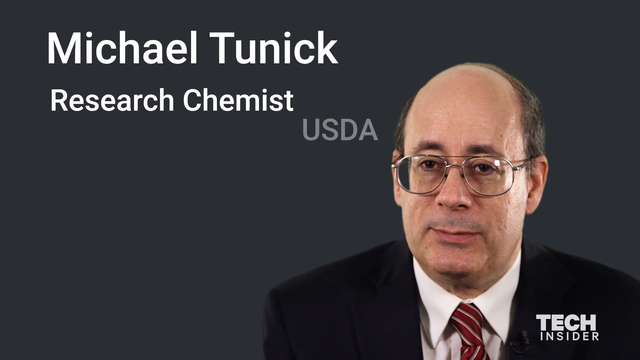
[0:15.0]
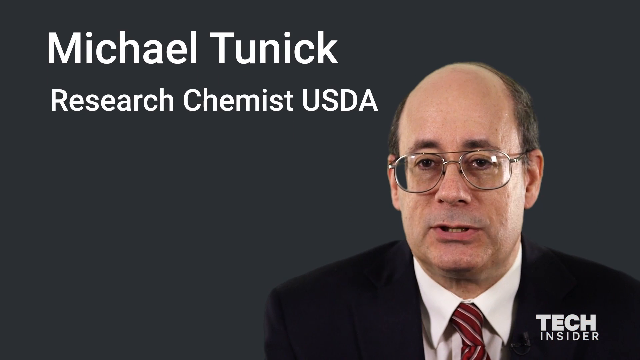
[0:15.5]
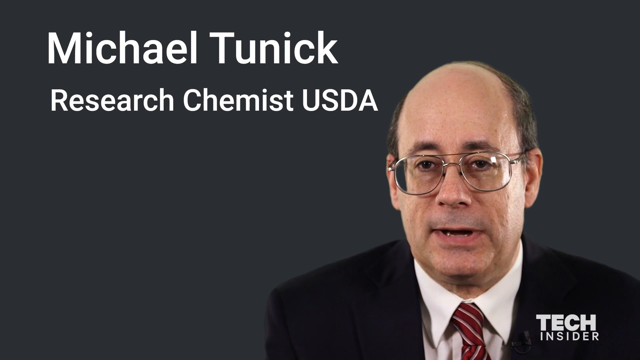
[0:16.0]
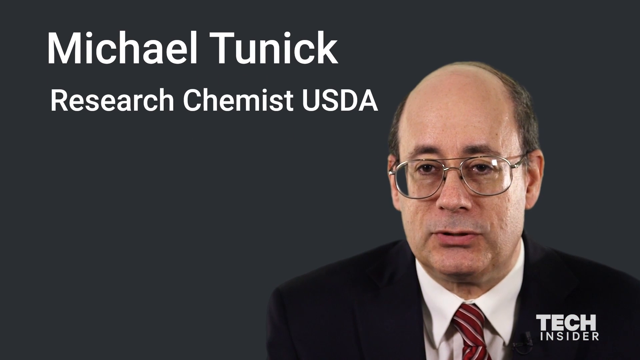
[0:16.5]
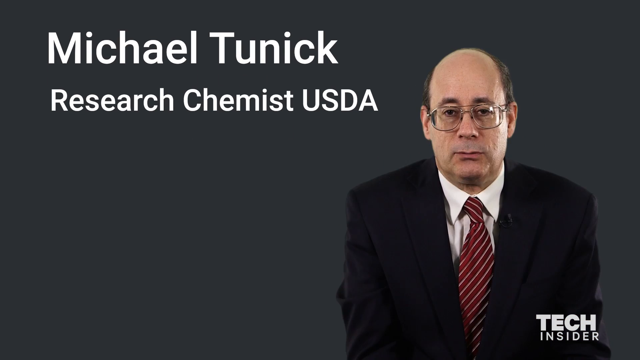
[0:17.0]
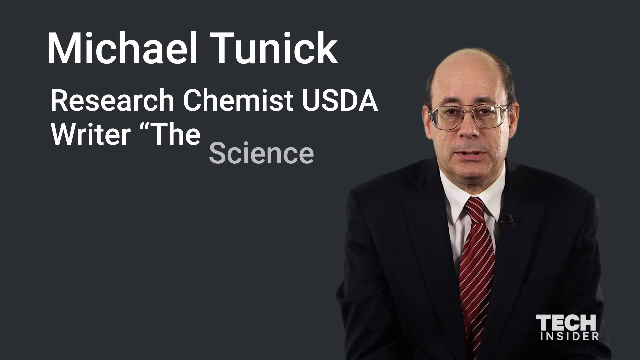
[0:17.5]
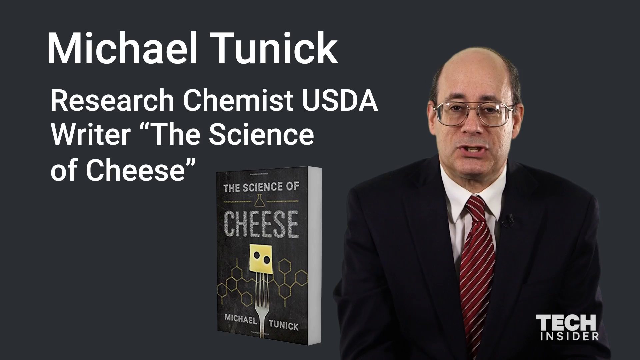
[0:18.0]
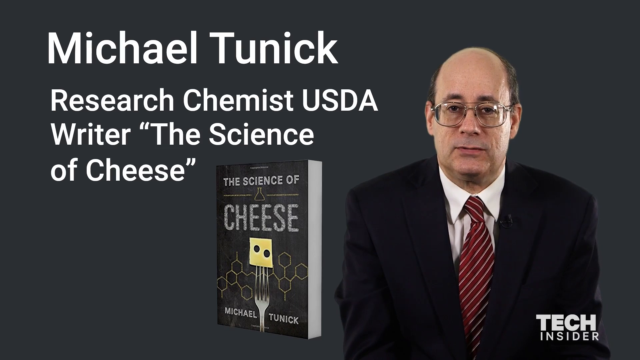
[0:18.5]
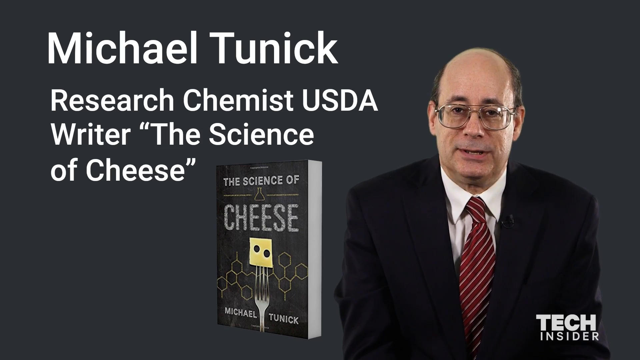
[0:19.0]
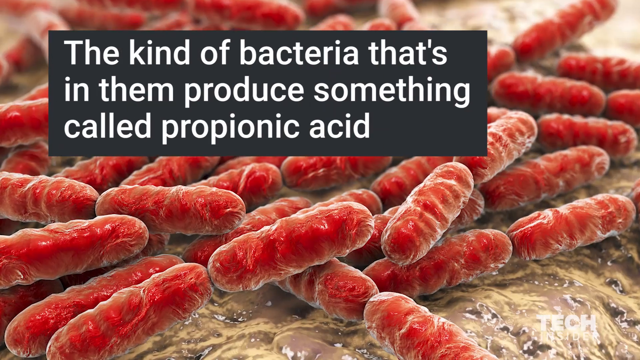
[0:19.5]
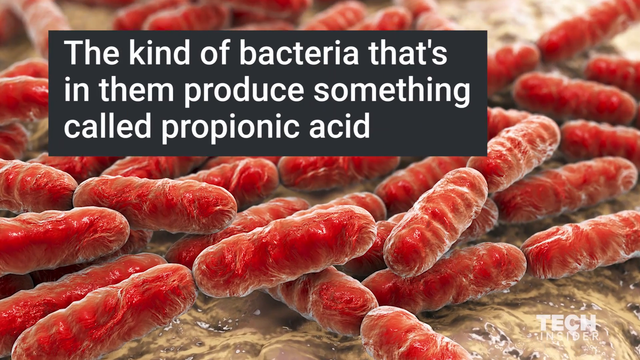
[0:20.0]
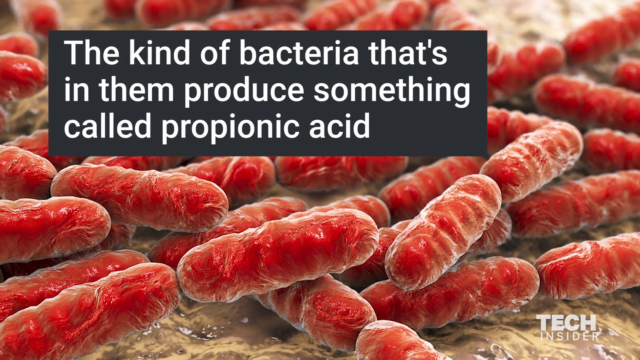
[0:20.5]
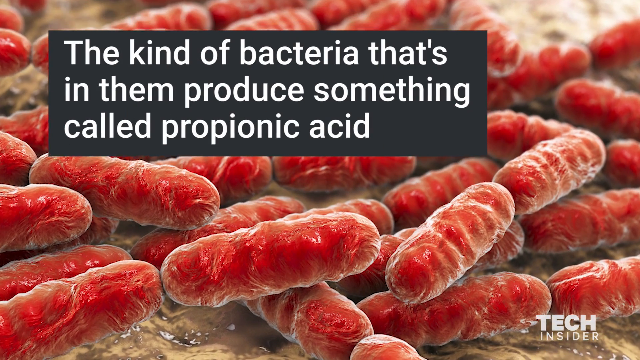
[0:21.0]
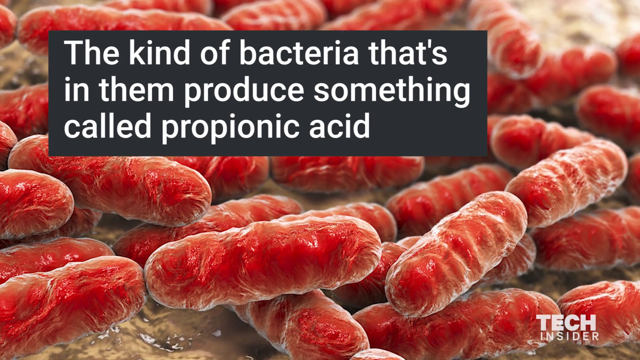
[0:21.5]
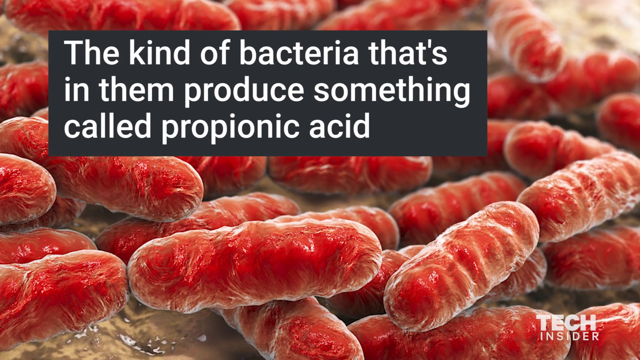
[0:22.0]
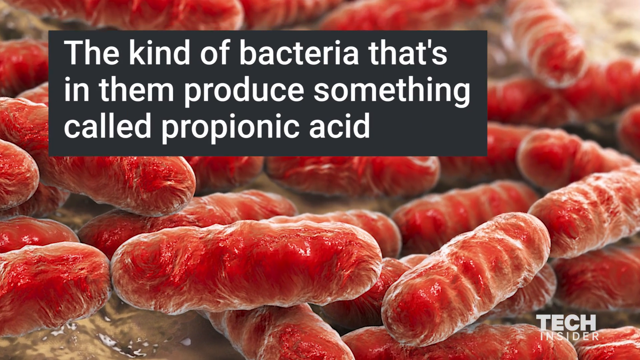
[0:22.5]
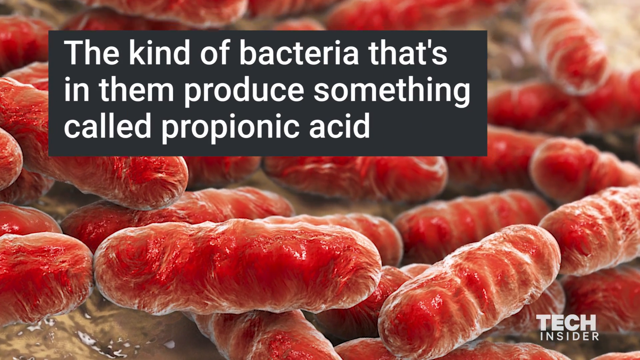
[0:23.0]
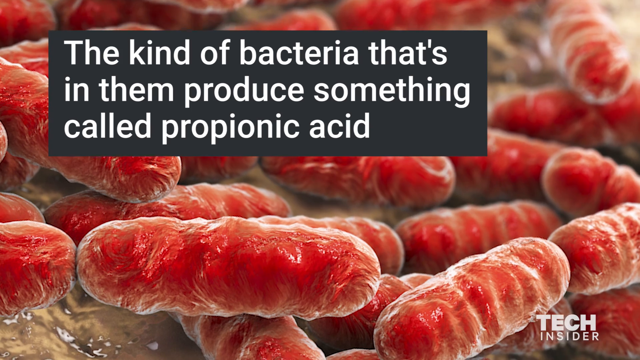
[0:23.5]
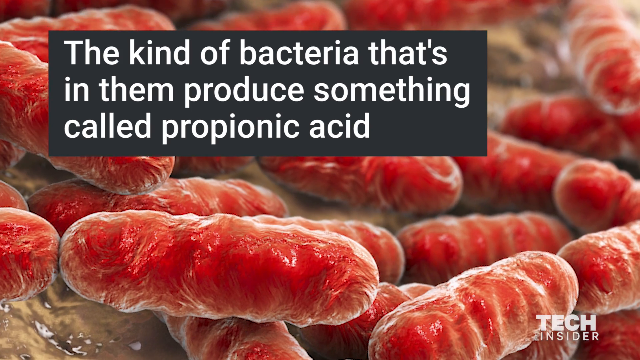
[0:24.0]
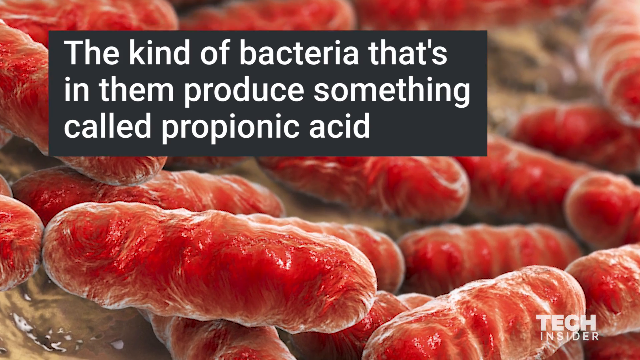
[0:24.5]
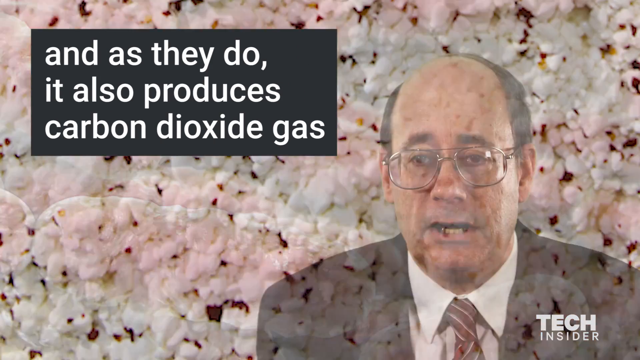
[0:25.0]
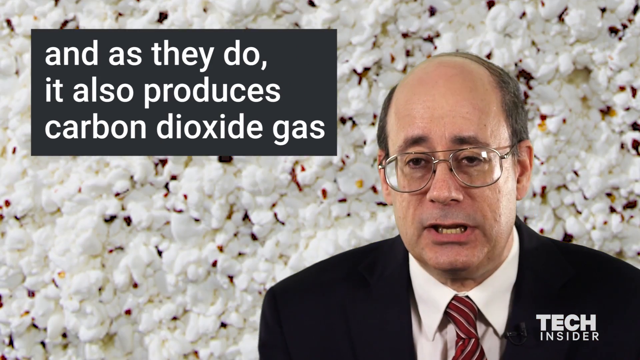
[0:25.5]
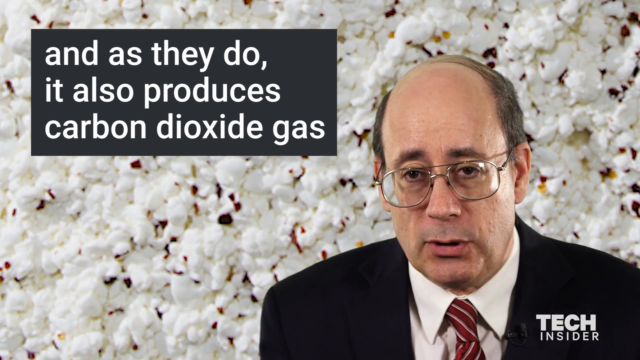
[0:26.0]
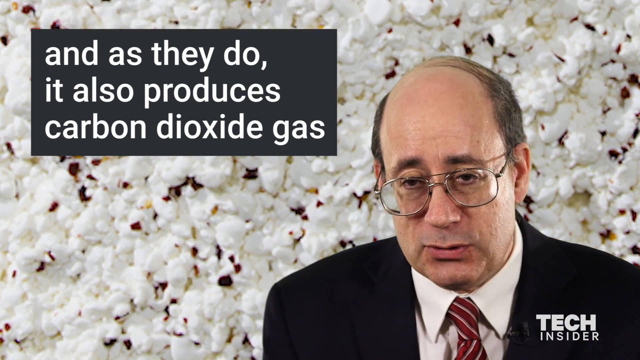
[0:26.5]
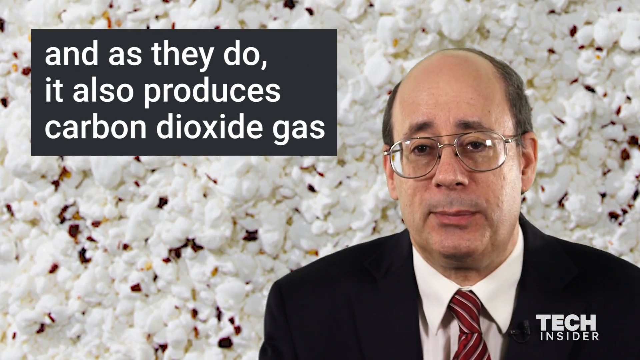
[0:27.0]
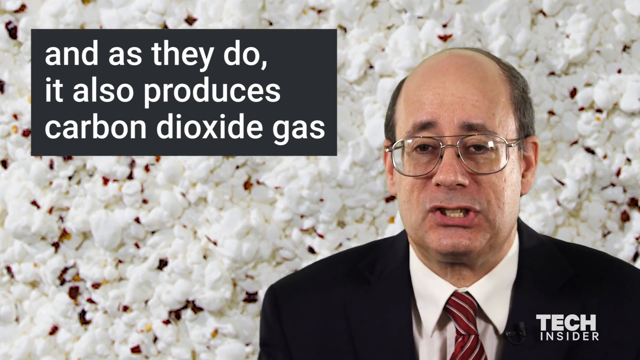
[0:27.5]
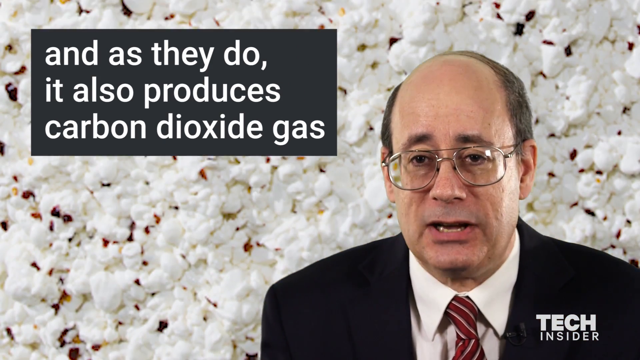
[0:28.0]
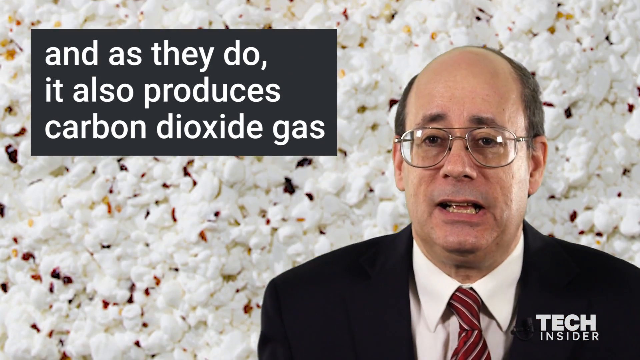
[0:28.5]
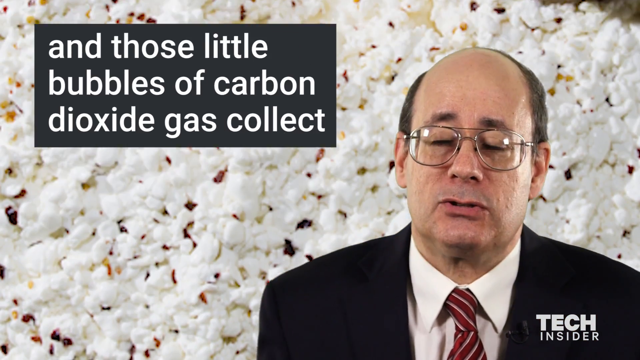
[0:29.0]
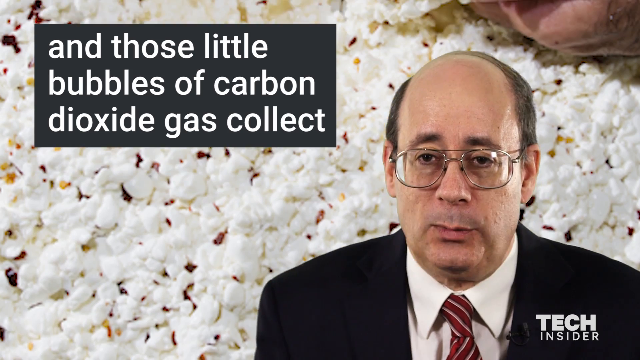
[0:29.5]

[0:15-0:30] A man named Michael Tunick, a research chemist for the USDA and the writer of a book called The Science of Cheese, is speaking. Writing on the screen says: "the kind of bacteria that's in them produce something called propionic acid, and as they do it also produces carbon dioxide gas, and those little bubbles of carbon dioxide gas collect." Some type of microscopic object, red and in segments, is shown on the screen. Then another background screen appears that looks like lots of pieces of white popcorn.